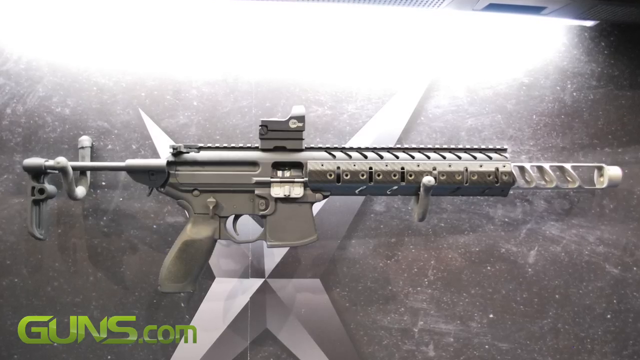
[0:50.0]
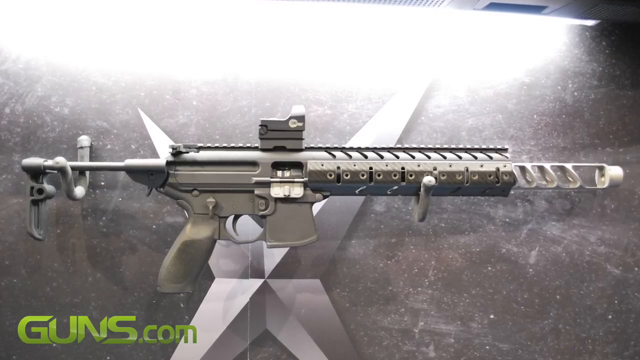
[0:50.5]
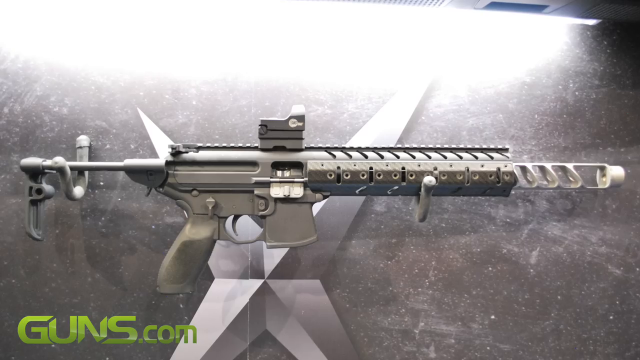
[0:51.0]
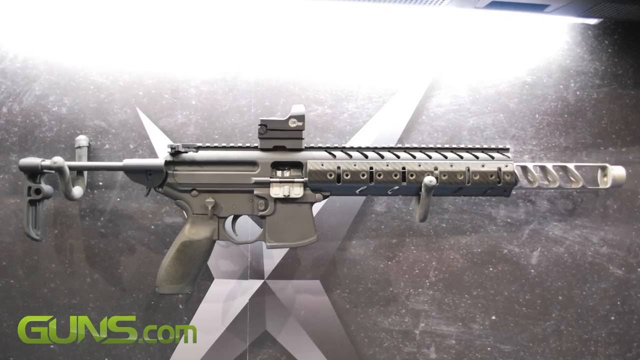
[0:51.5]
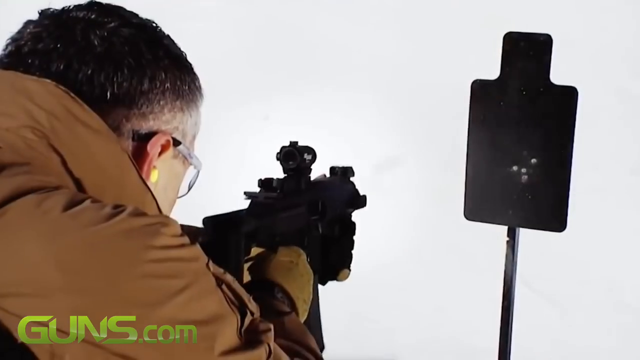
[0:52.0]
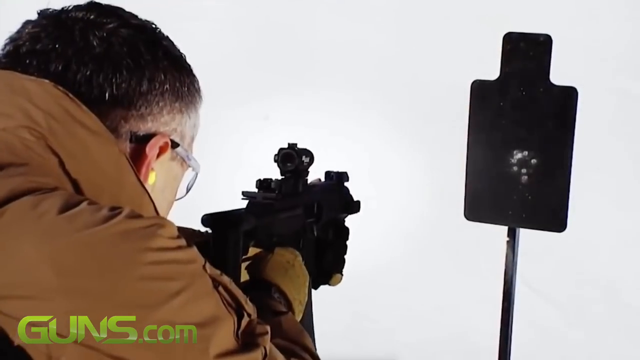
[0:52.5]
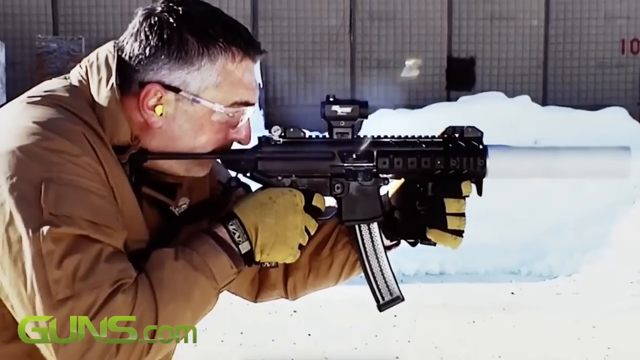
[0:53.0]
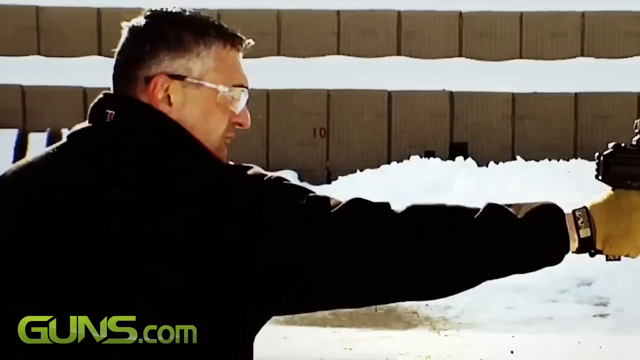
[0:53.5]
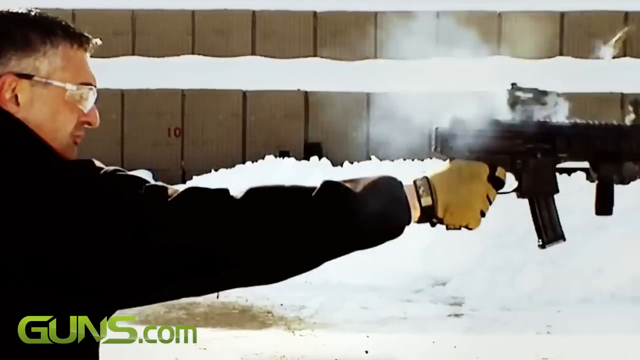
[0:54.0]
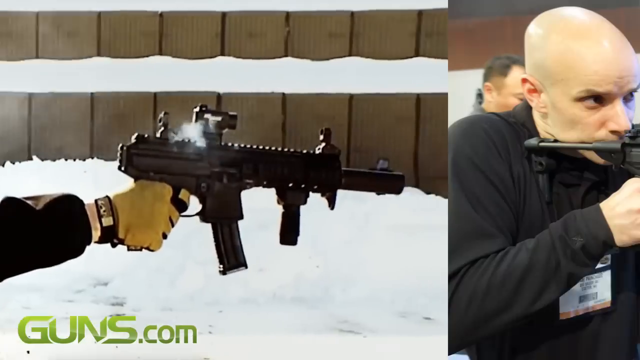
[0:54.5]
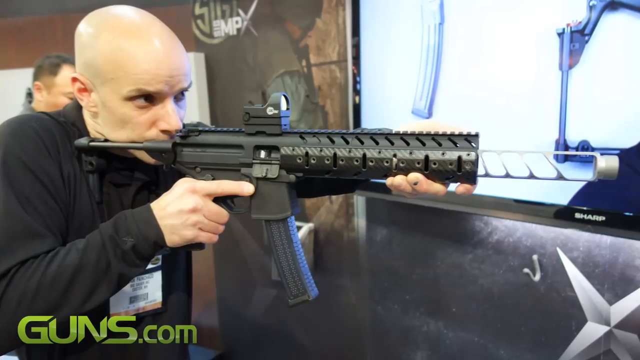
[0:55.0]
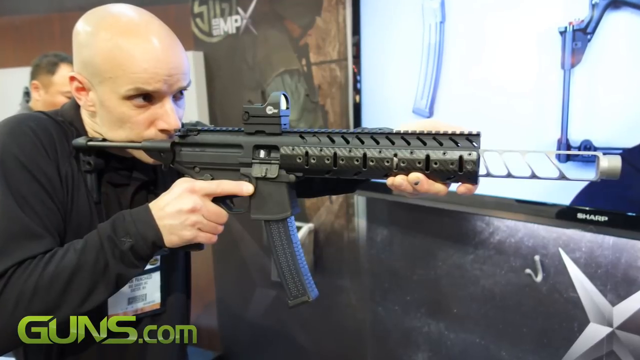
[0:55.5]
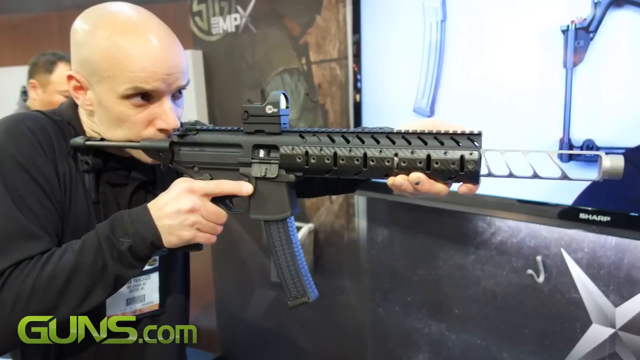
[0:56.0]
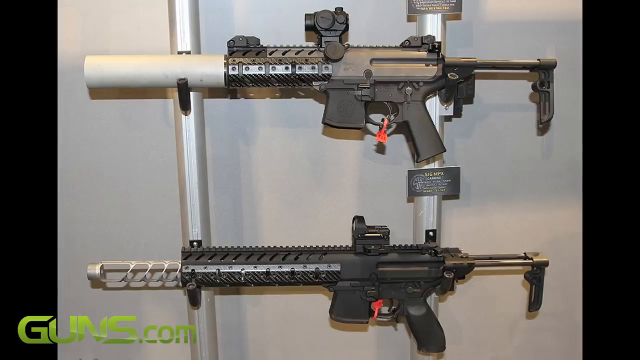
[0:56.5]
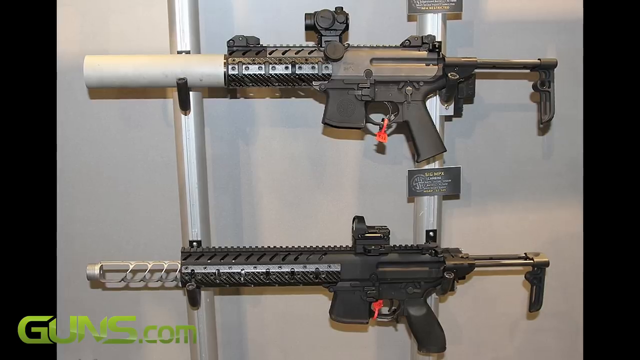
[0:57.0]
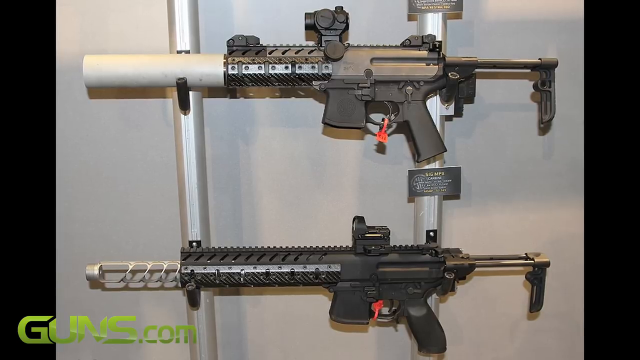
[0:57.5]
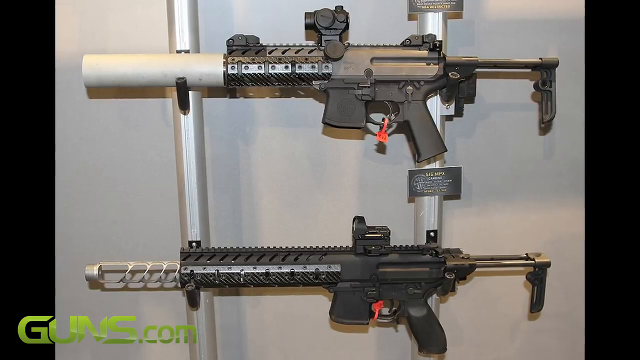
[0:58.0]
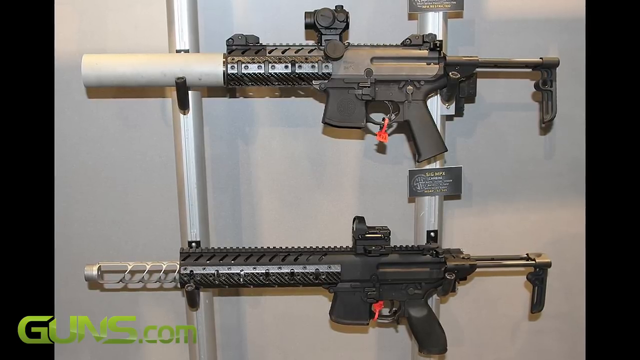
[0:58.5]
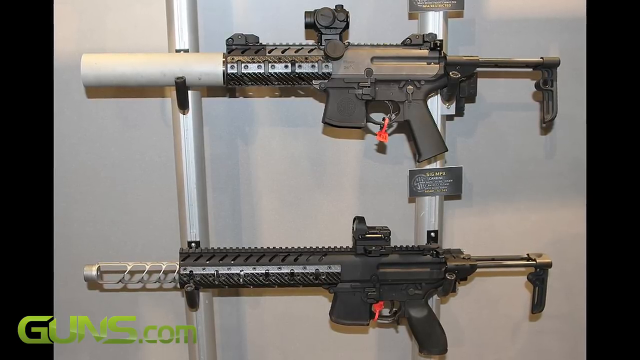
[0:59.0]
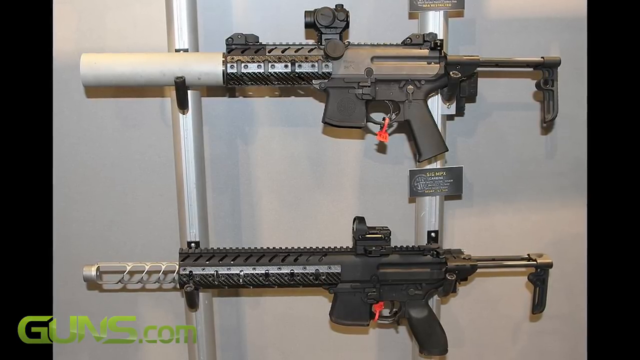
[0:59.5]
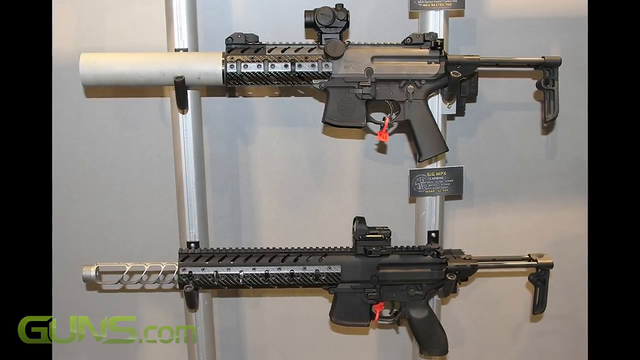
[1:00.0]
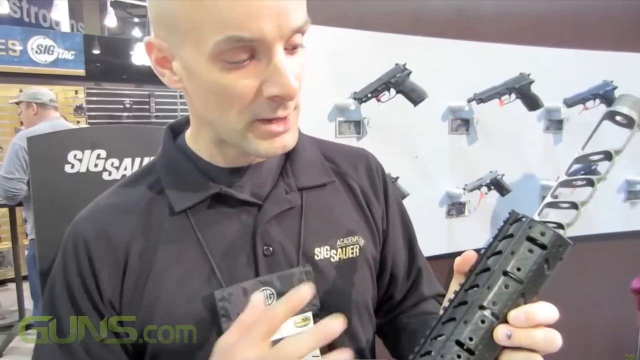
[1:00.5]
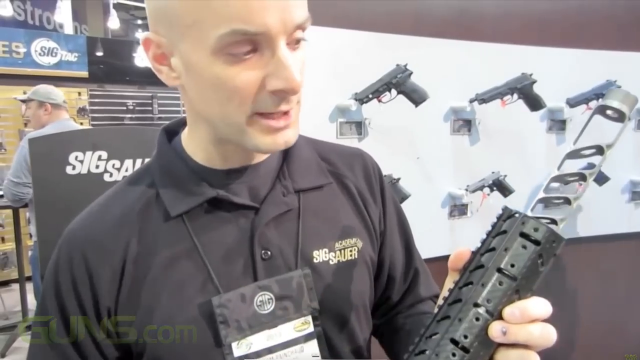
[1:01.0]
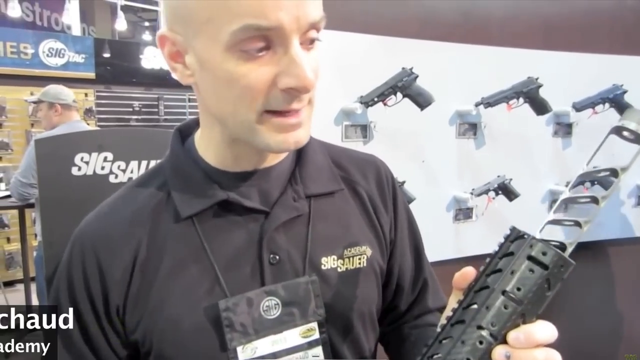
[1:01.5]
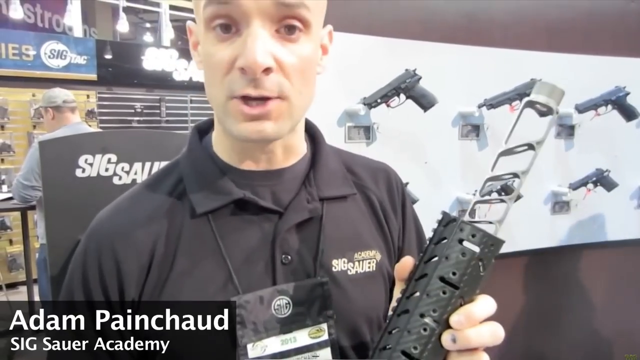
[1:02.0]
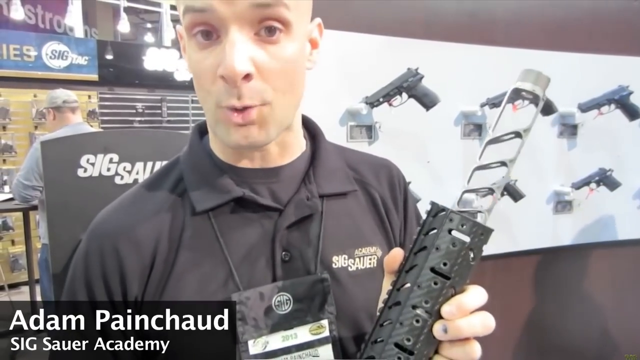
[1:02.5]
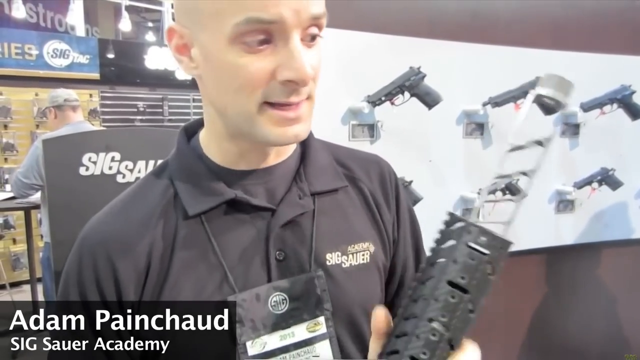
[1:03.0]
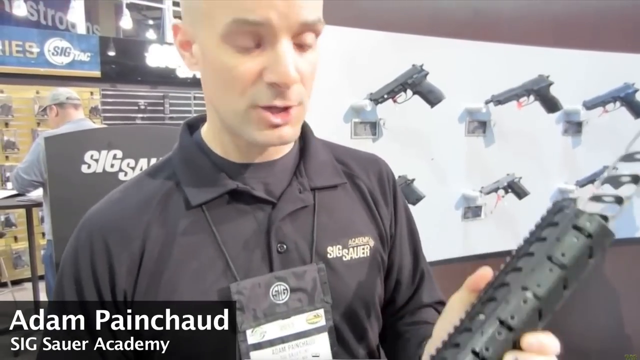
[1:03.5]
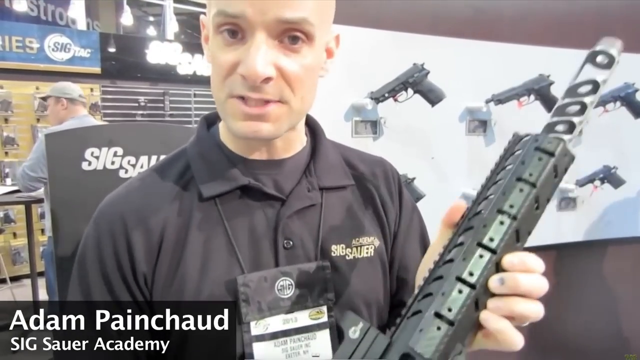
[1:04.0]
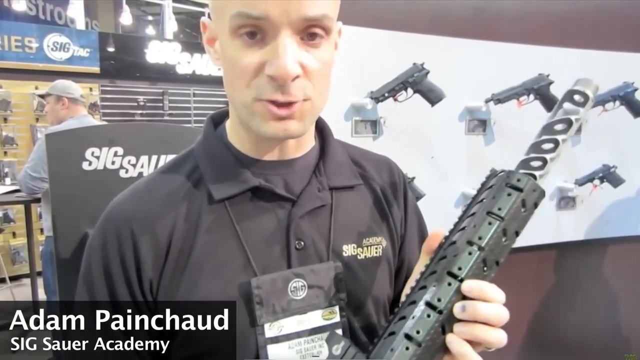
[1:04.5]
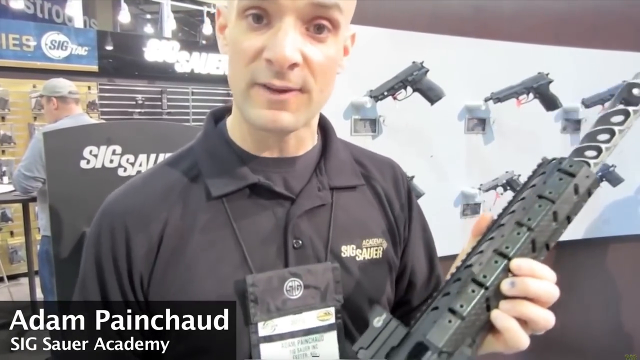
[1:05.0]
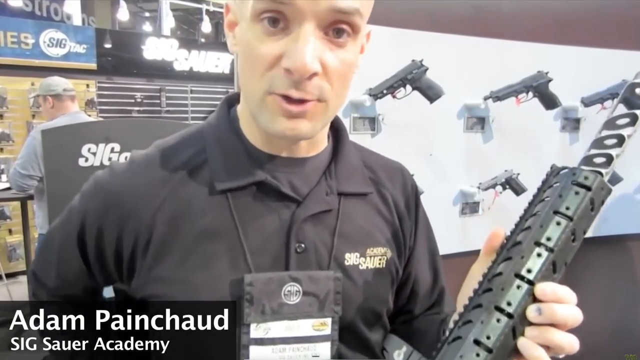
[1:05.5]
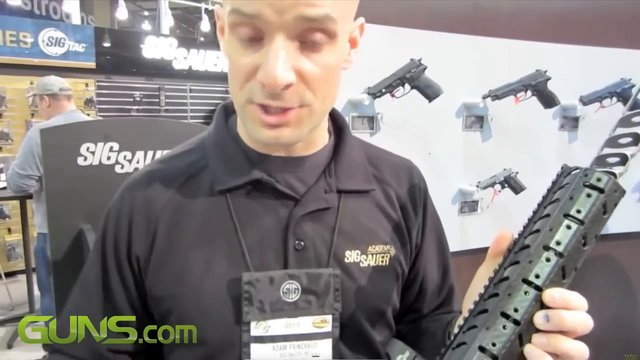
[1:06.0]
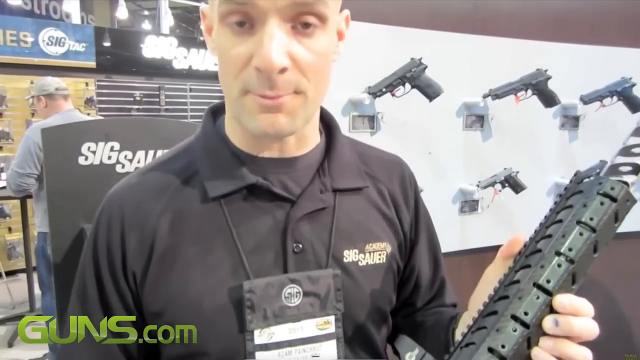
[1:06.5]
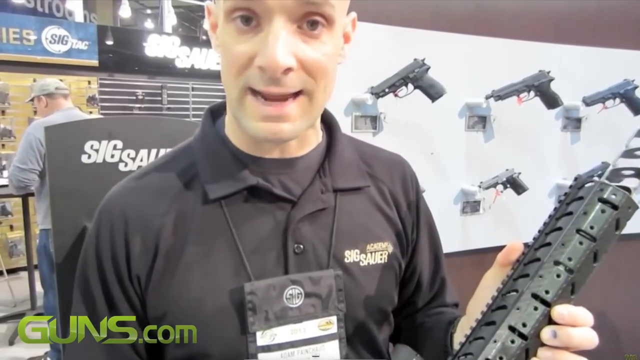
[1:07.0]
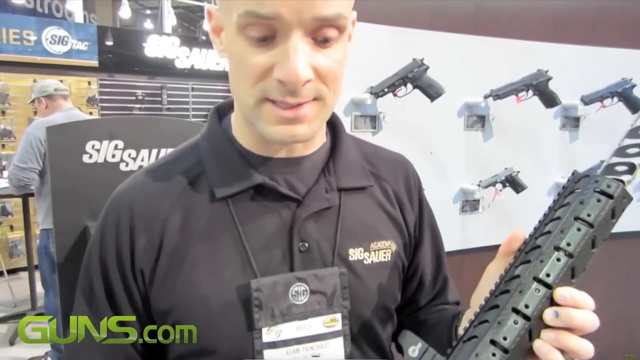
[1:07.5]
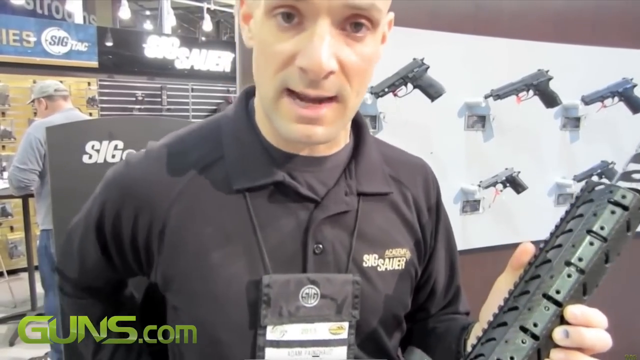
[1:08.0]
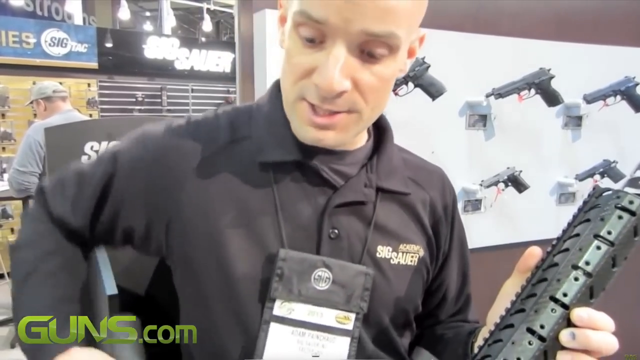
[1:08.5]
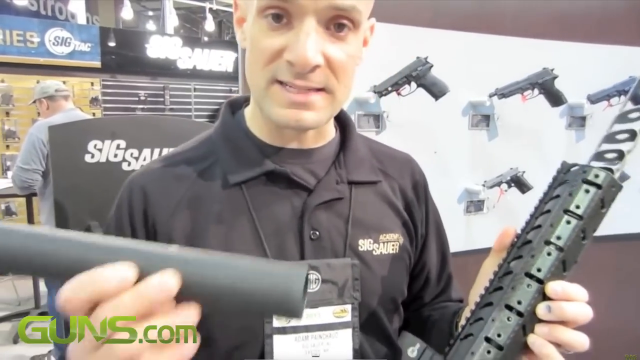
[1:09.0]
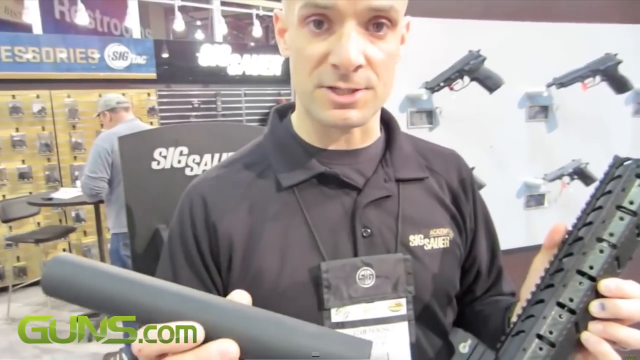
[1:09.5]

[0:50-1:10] Another image shows a similar type of weapon; these apparently are all different models of something similar, and they look military grade. The handle looks like one on a pistol, with another holder handle in front of it. The barrel up top is very intricate and thick, and many of them have white plastic bits on the end, which might be the silencer. The shot rests on this one. Then several shots of real video, rather than the still images shown so far, show people firing these weapons. Someone wearing glasses is seen from behind firing at a target, and what looks like the same man appears in several shots firing from left to right; in one he holds the weapon with one hand. Next, a display shows two of these weapons resting on a rack on the wall. Then a video shows a man holding one of these weapons by the barrel and talking to the camera about it. He is identified as Adam Painchaud. He is in a gun shop, with guns on display in the background.